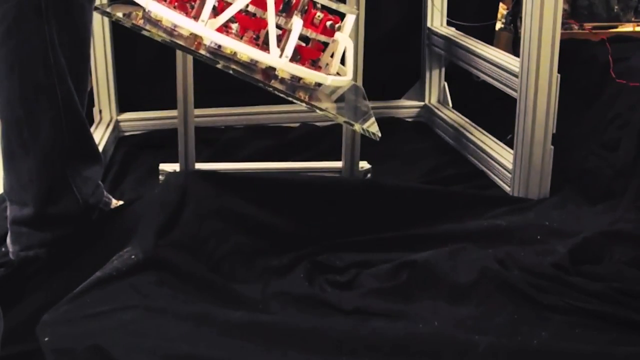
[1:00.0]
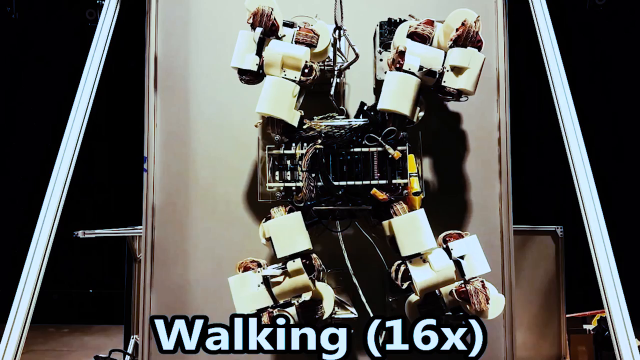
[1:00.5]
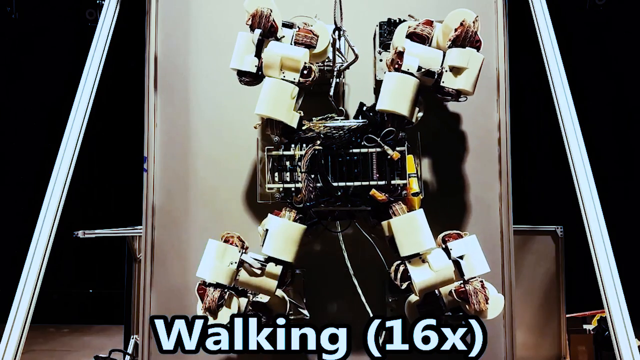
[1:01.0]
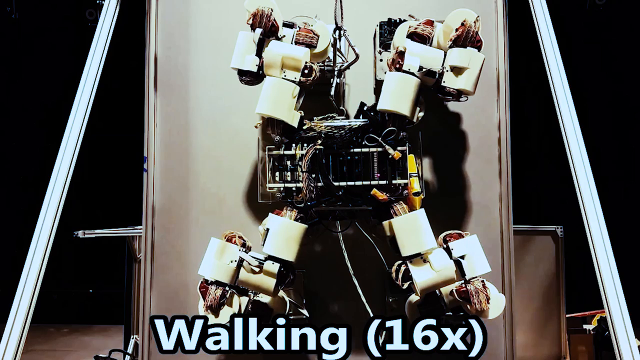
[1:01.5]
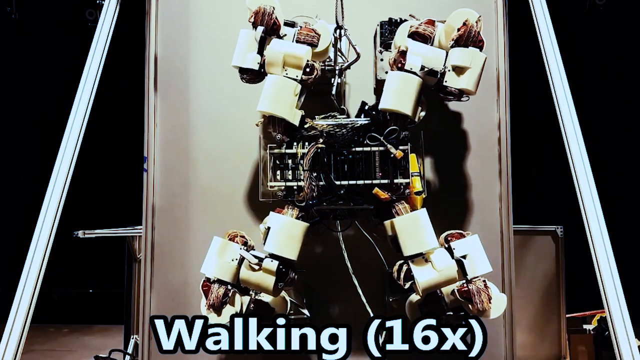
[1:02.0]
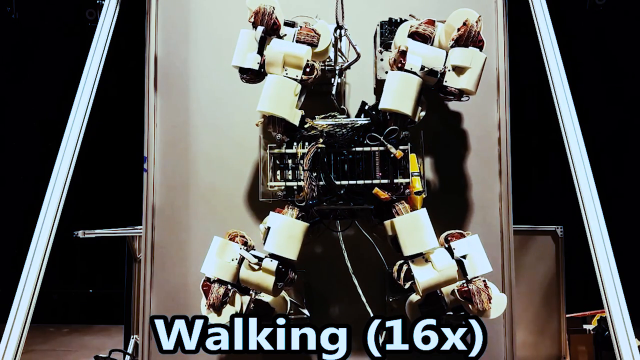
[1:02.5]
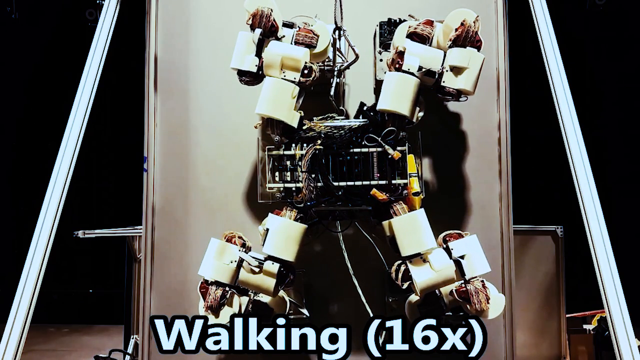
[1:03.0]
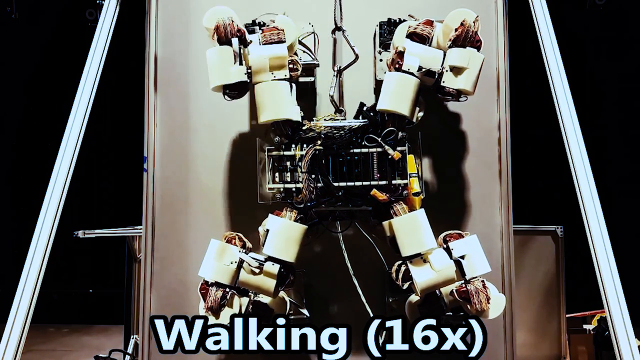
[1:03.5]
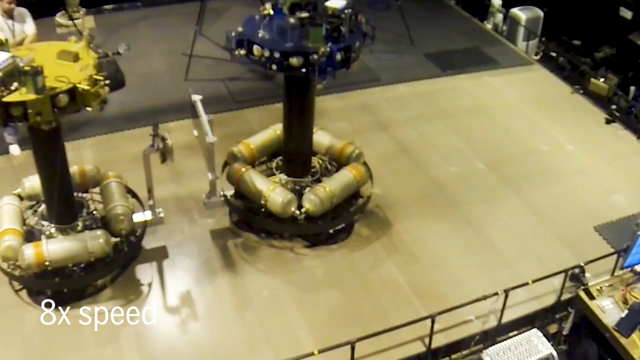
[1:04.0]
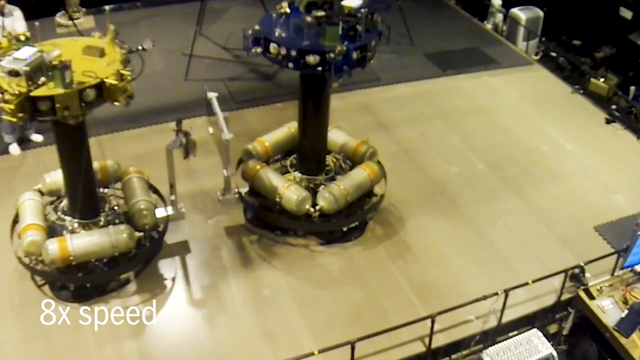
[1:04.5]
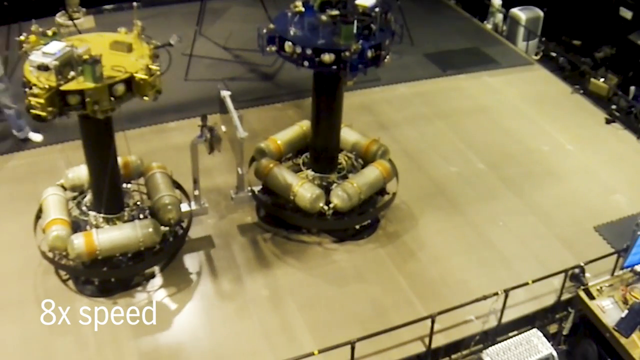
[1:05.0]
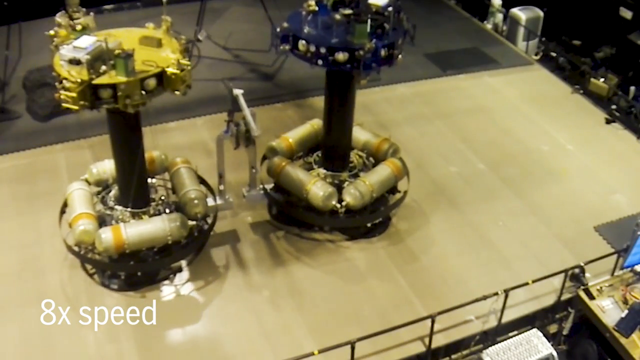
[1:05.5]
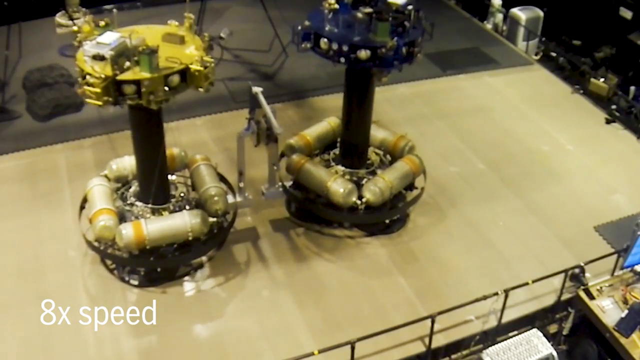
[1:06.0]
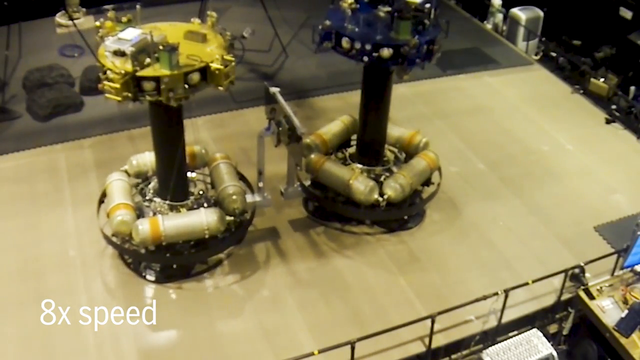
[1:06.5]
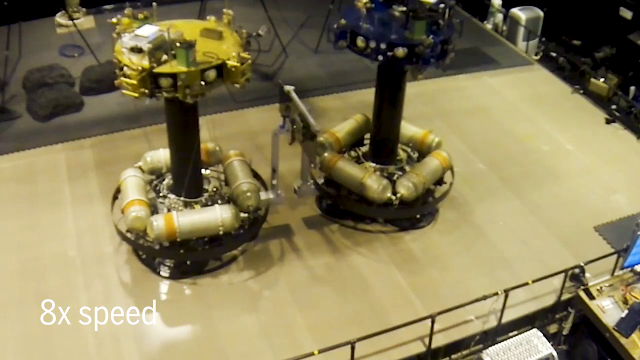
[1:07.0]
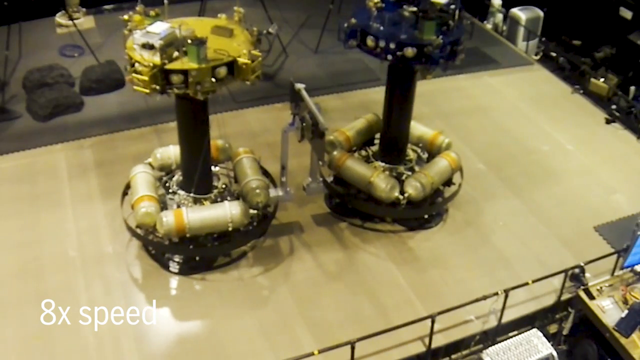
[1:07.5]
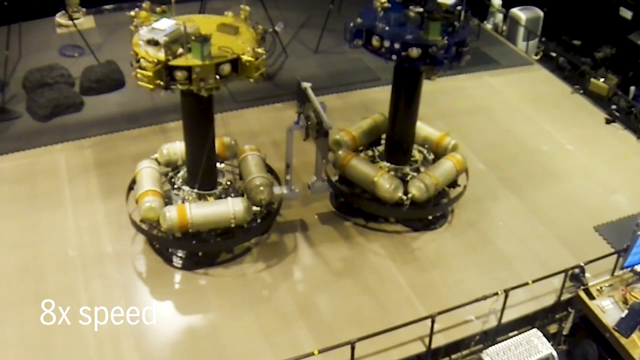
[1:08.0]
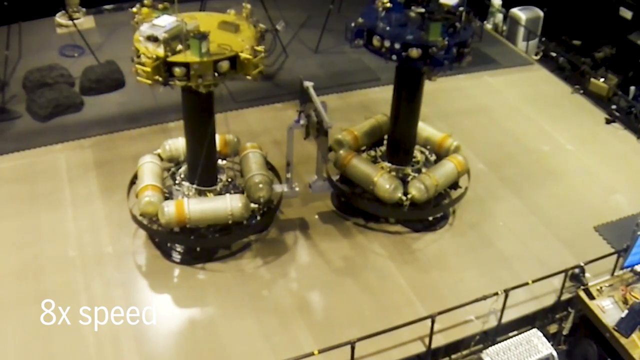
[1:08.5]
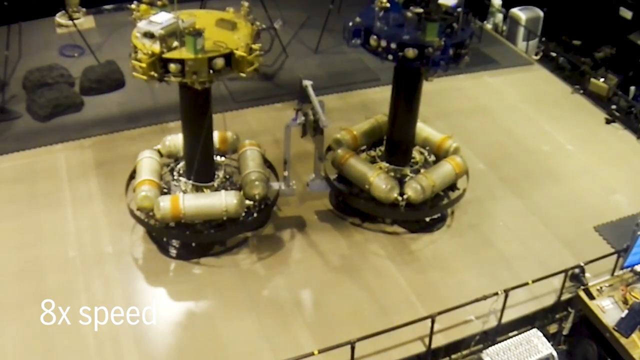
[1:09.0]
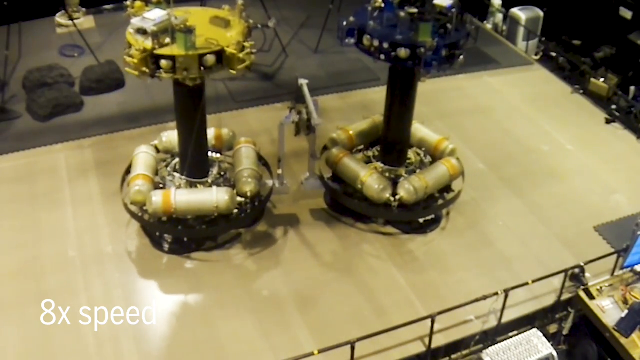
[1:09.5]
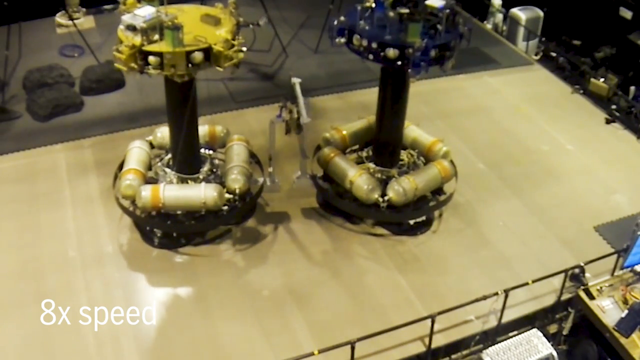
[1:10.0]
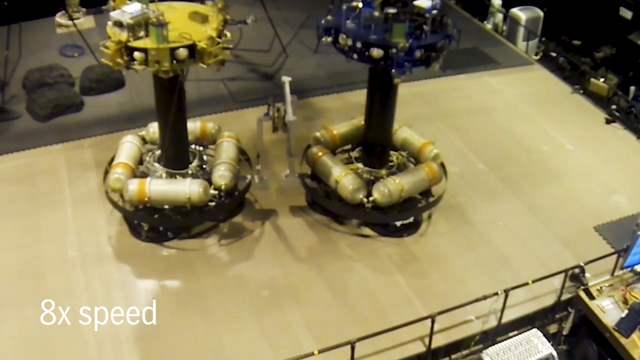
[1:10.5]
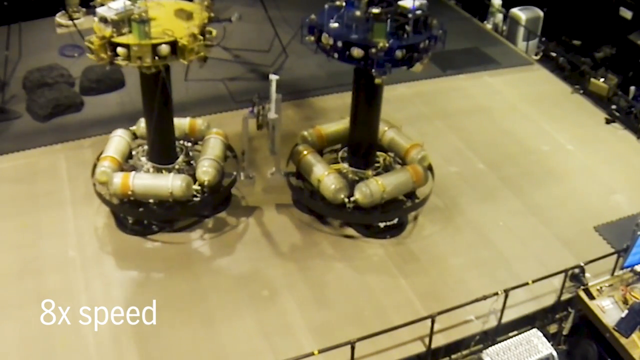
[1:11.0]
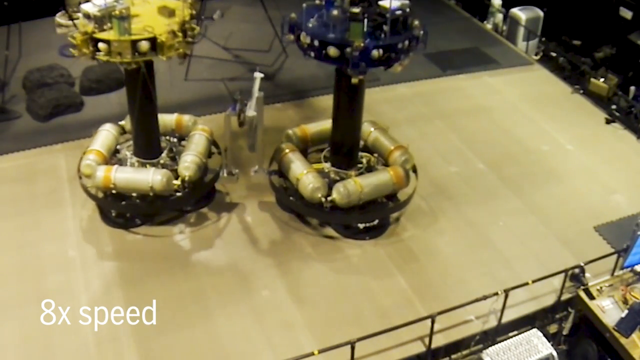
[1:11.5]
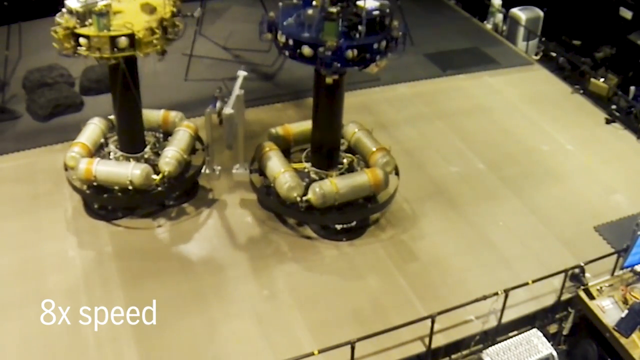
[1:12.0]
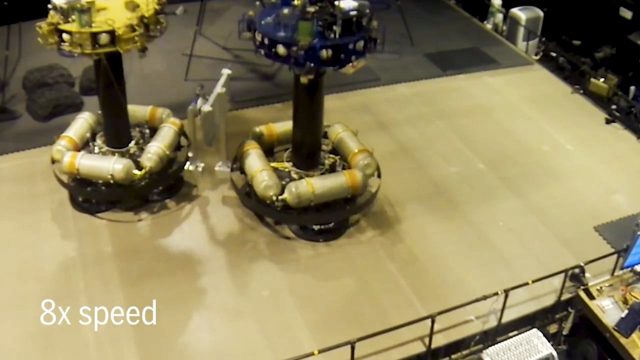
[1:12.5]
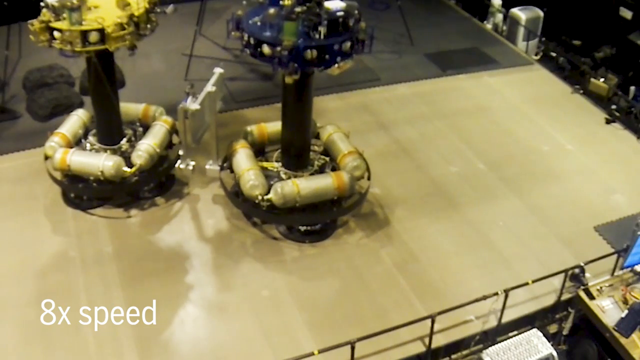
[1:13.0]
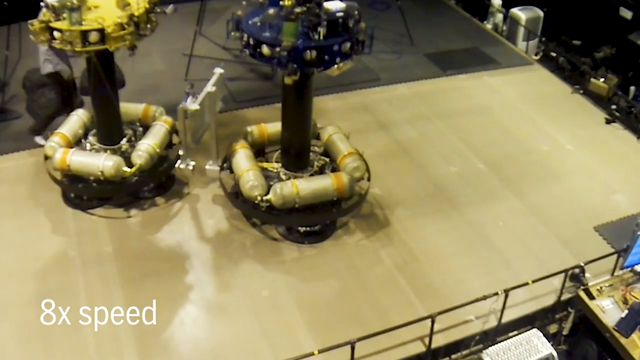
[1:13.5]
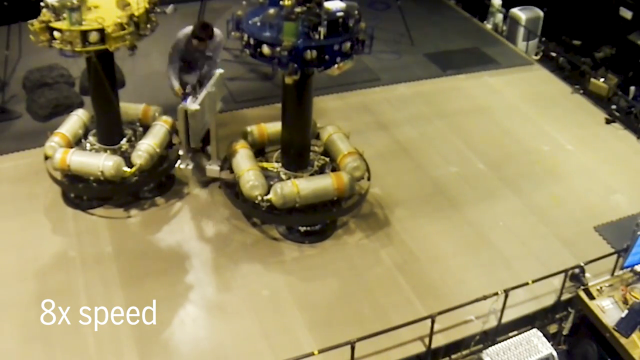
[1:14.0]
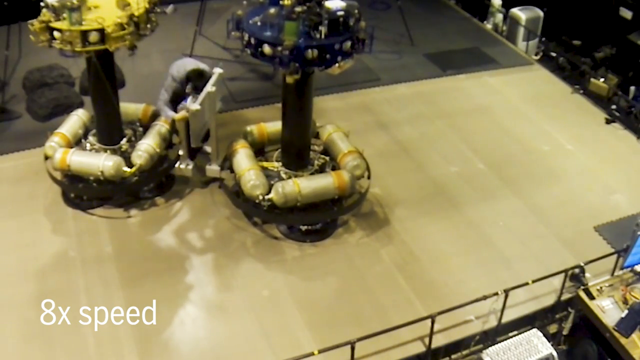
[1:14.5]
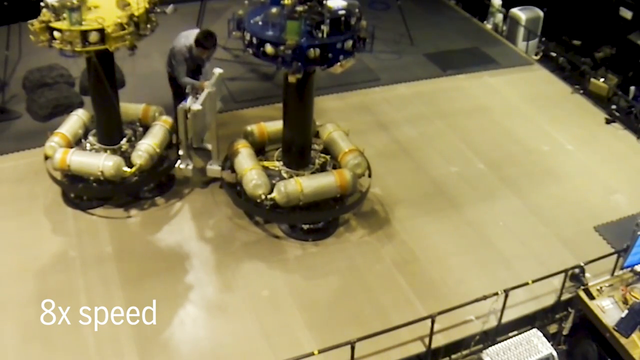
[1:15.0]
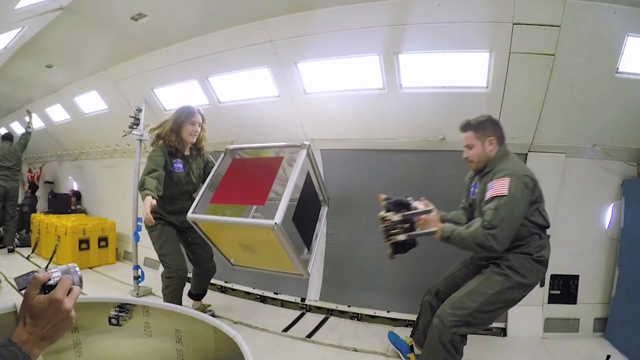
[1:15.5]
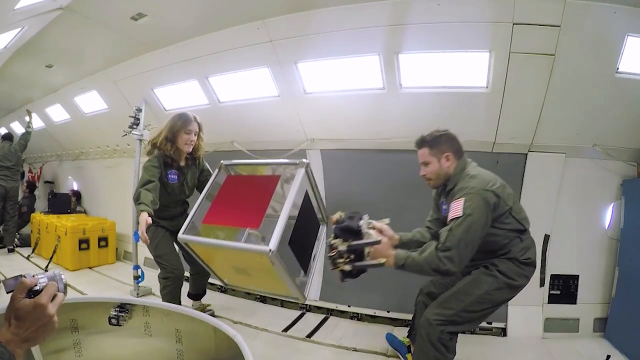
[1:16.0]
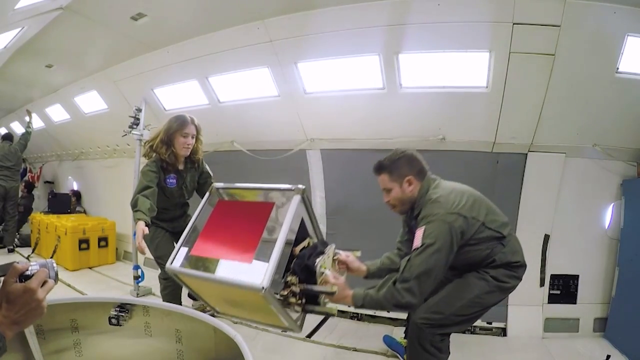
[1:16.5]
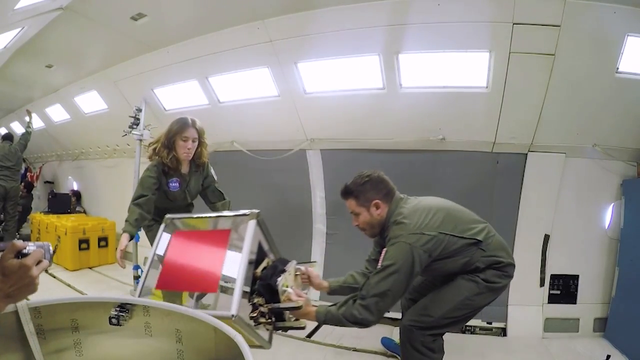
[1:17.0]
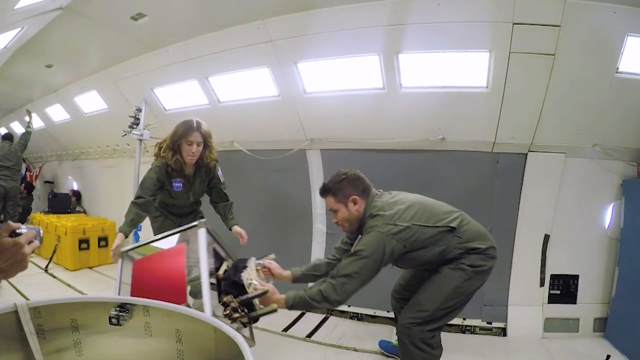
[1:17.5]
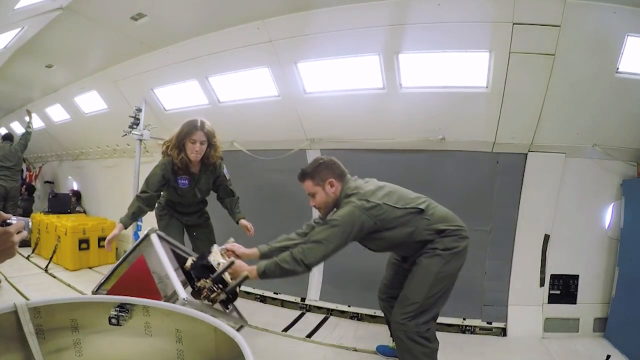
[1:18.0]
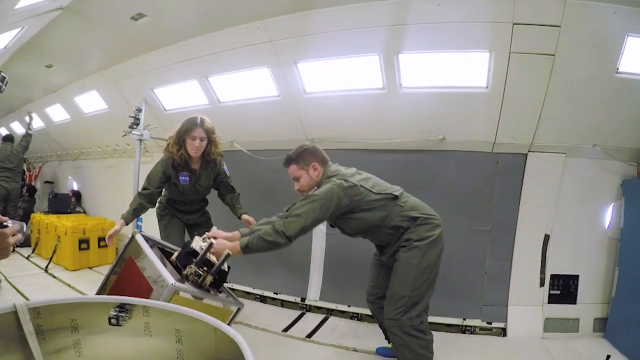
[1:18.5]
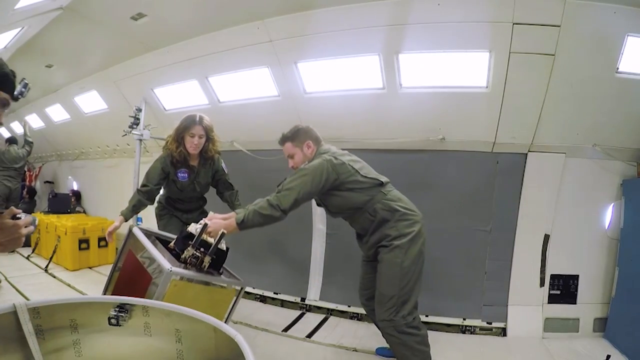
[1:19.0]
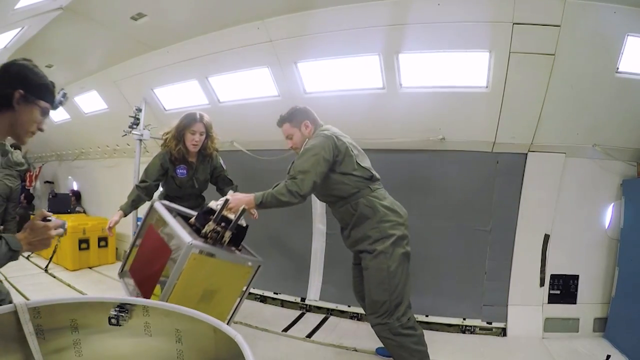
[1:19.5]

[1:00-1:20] A white square is sitting up vertical with two braces in front of it so it doesn't fall. Attached to it is a black square with four white arms and legs hanging off of each corner, and the white arms are moving in and out. At the bottom of the screen the text reads "walking" and then, in parentheses, "16x". The video cuts to a gray conveyor belt with two things that look like small robots on it. They are round at the base and have a black cylinder in the middle that goes straight up to another round part; the one in front has a blue top and the one behind it has a yellow top. They are touching one another and slowly moving around on the conveyor. In the bottom left corner of the screen the text reads "8x speed". A man comes into frame, goes up to one of the robots and pushes it off the other, separating them.